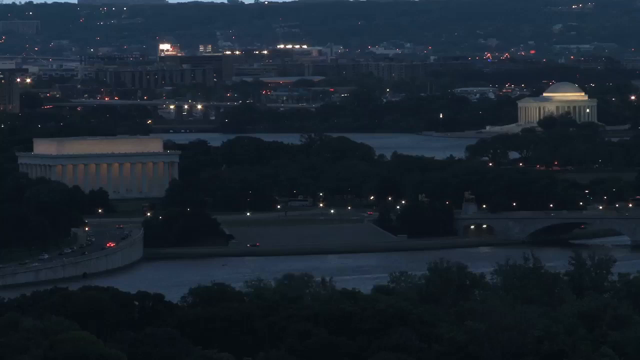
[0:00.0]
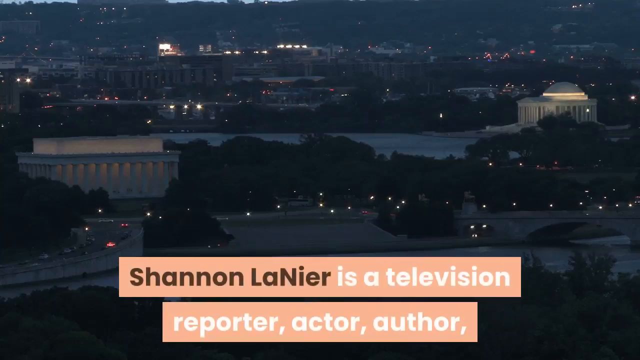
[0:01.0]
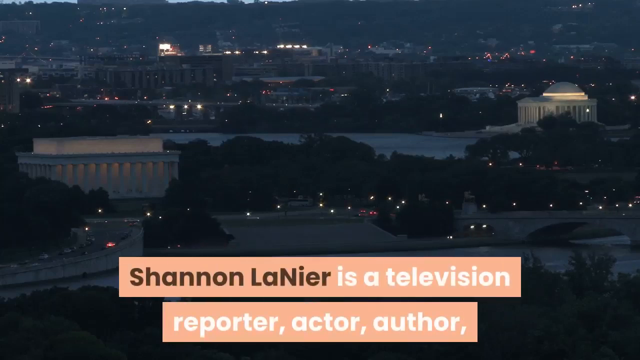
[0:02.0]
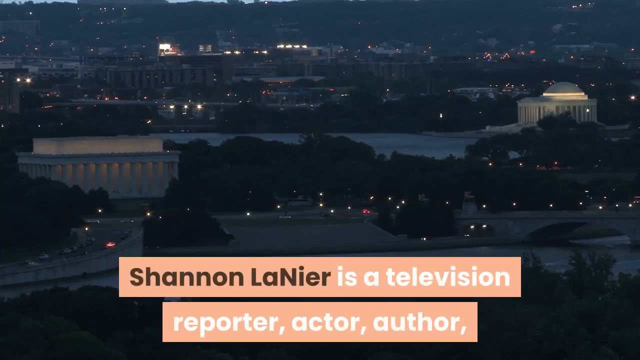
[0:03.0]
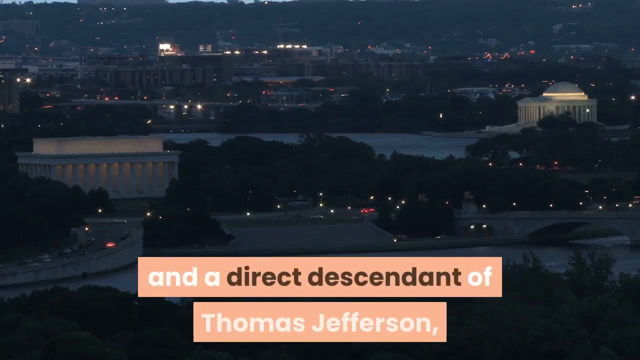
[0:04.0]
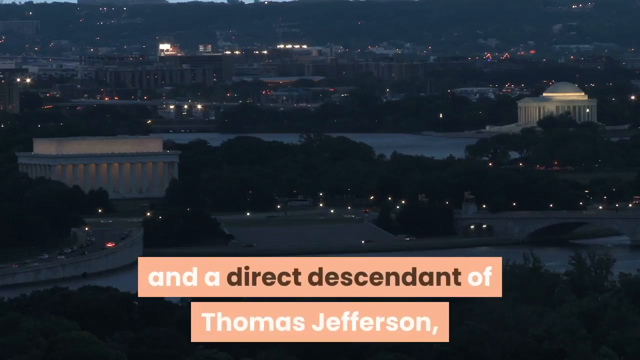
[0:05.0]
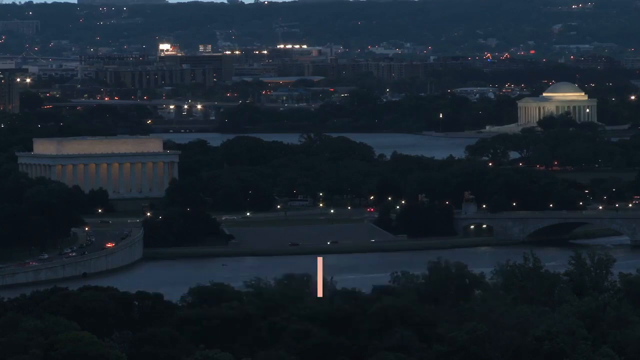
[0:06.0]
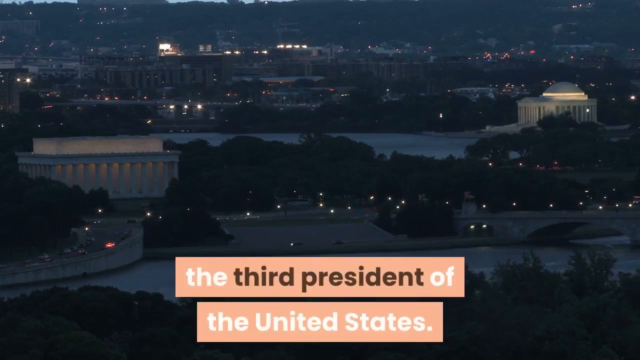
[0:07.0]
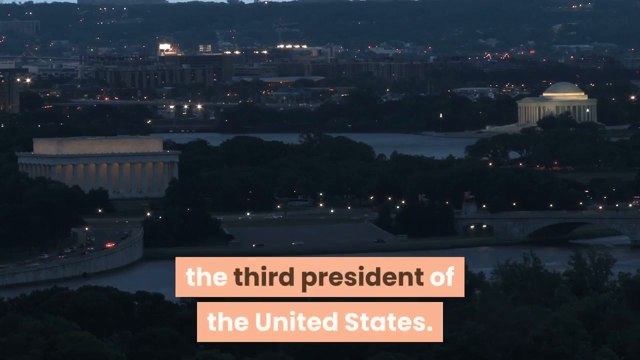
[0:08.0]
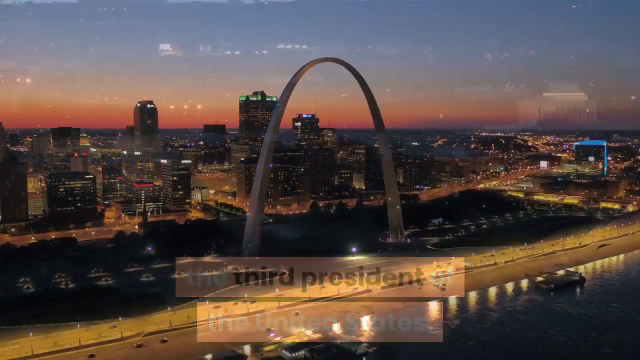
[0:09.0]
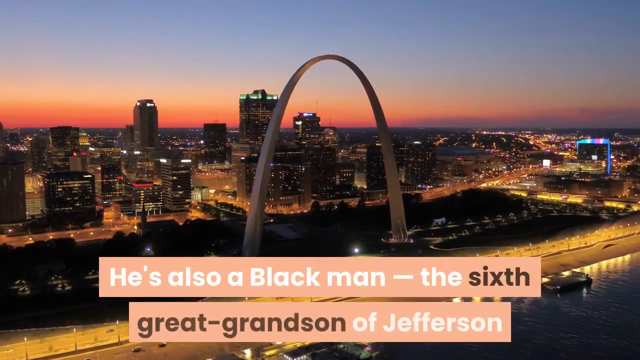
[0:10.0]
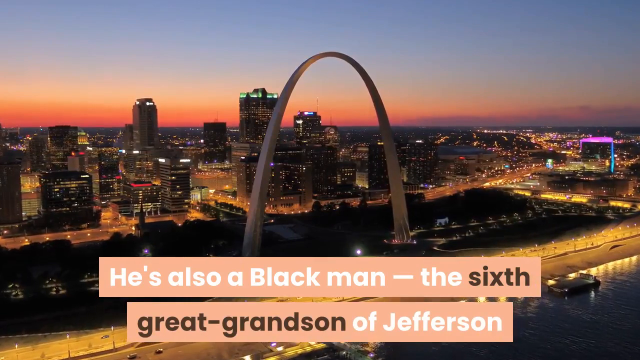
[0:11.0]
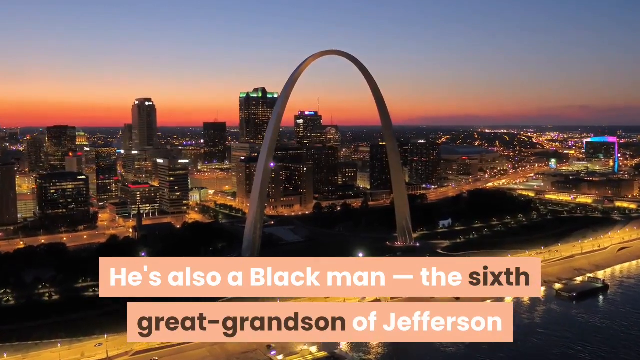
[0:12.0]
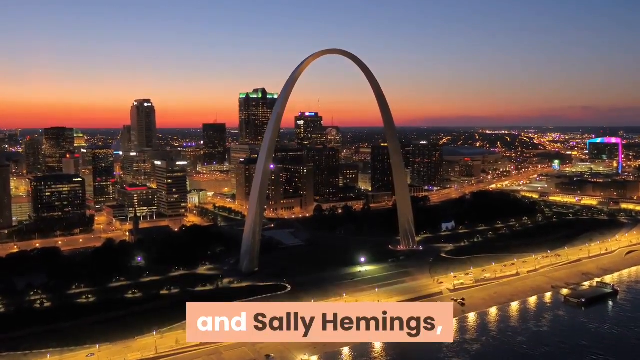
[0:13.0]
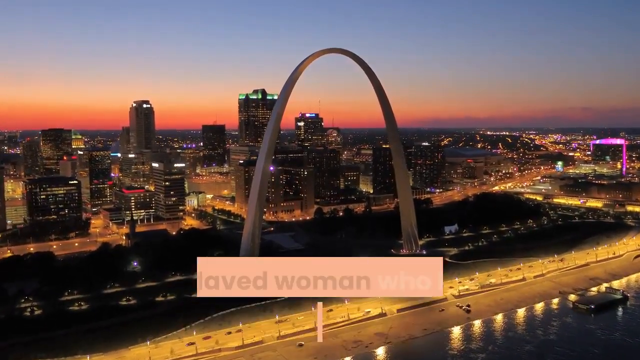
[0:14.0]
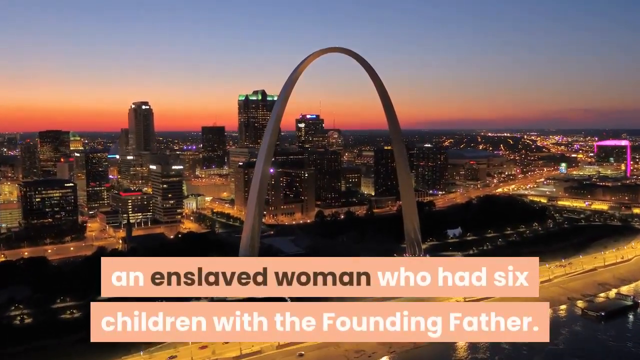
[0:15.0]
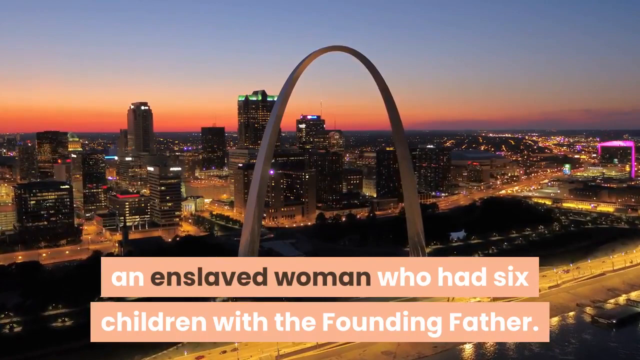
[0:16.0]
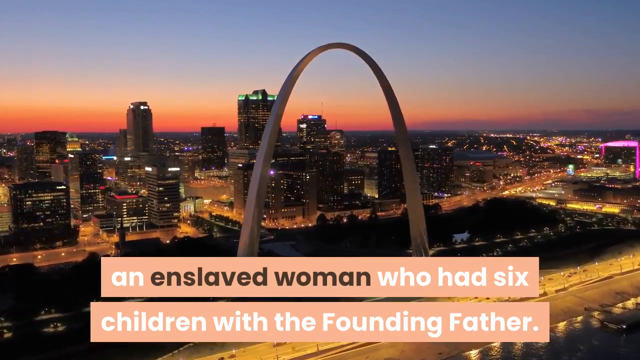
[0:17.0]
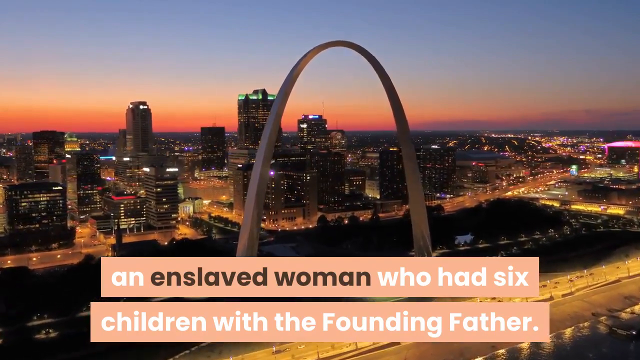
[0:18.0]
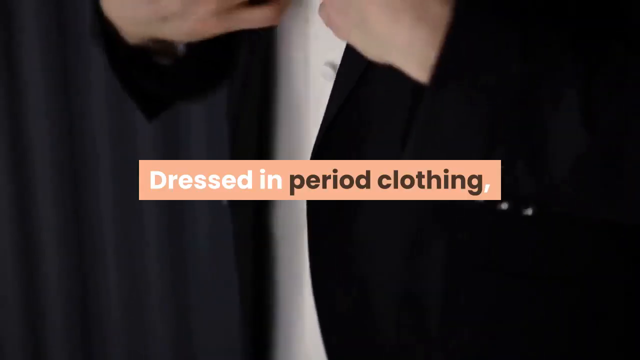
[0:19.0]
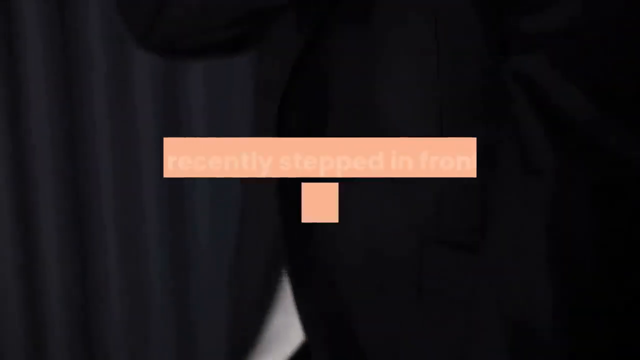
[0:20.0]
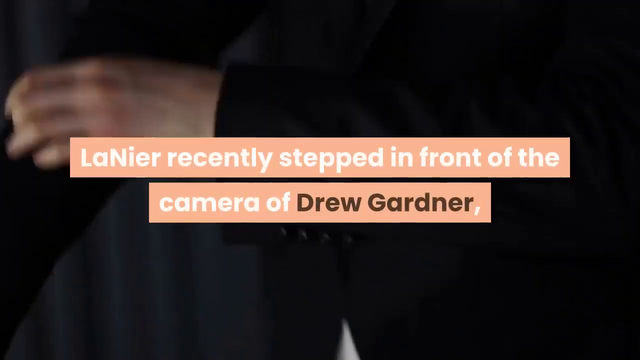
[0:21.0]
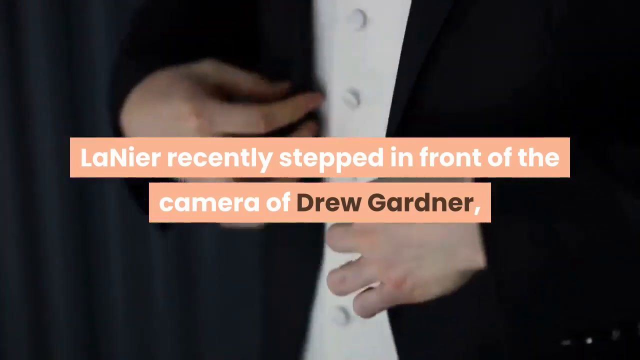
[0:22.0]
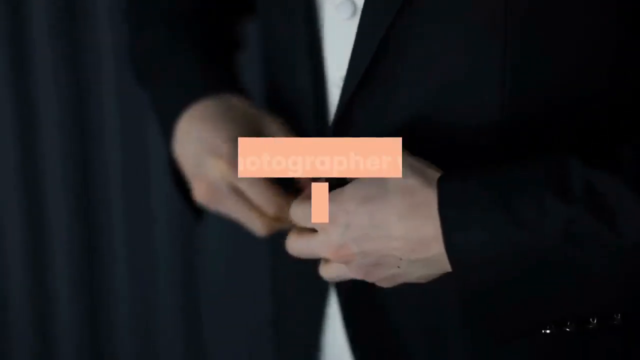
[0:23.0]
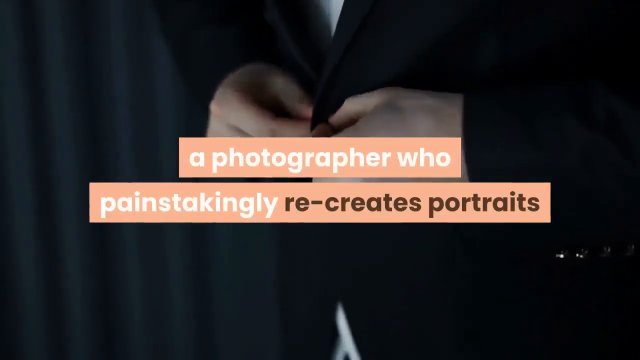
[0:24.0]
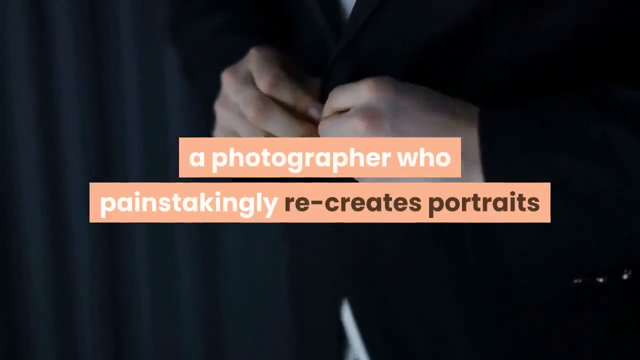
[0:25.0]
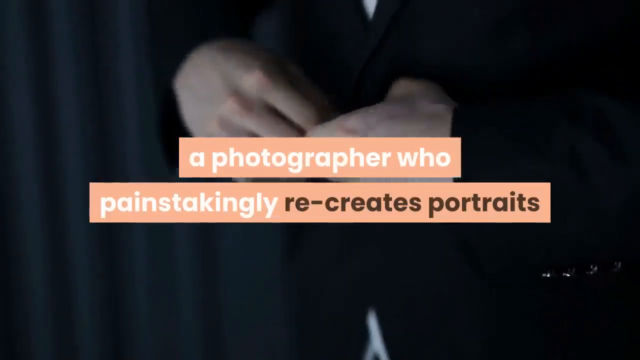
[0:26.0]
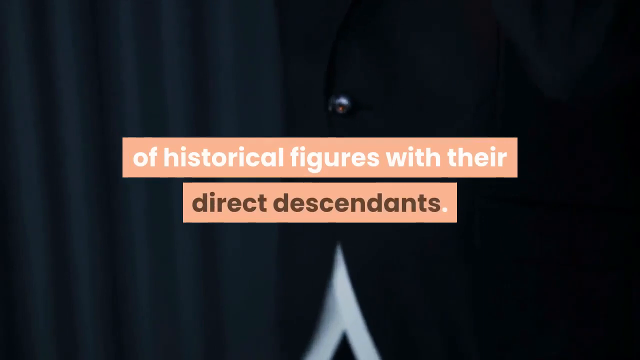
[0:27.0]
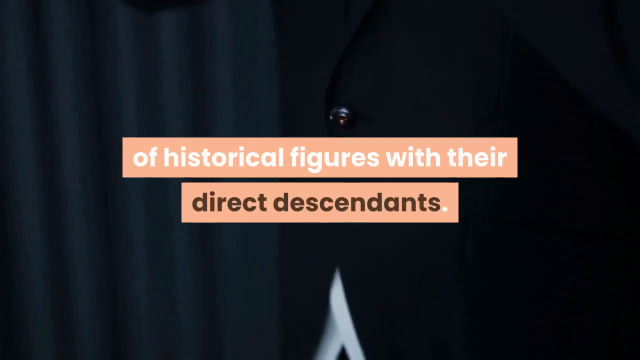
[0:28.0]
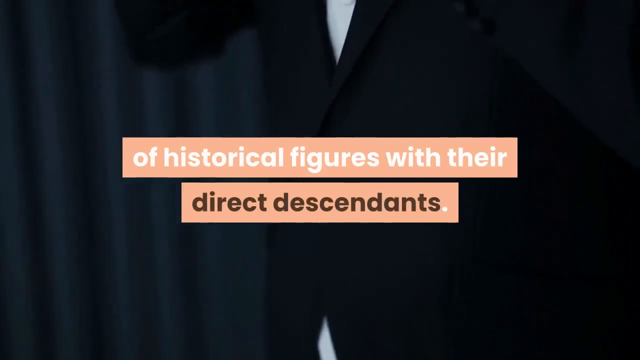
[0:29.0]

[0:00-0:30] A city backdrop appears to be at night: it is very dark, with certain buildings lit up and lights coming from some cars on the road. The majority of the background is dark. In this bird's-eye view of the city, which looks tranquil and calm, cars move in the background. On screen, inside a yellow border, brown text reads "Shannon Lanier" and continues in white text: "is a television reporter, actor, author, and a direct descendant of Thomas Jefferson", with "direct descendant" in the same brown colour and the rest in white. The text continues after Thomas Jefferson with "the third President of the United States." The background then changes to a different city, slightly more lit but still resembling evening or nighttime. The text continues: "He's also a black man, the sixth great-grandson of Jefferson and Sally Hemings, an enslaved woman who had six children with the founding father. Dressed in period clothing, Lanier recently stepped in front of the camera of Drew Gardner, a photographer who painstakingly recreates portraits of historical figures with their direct descendants."